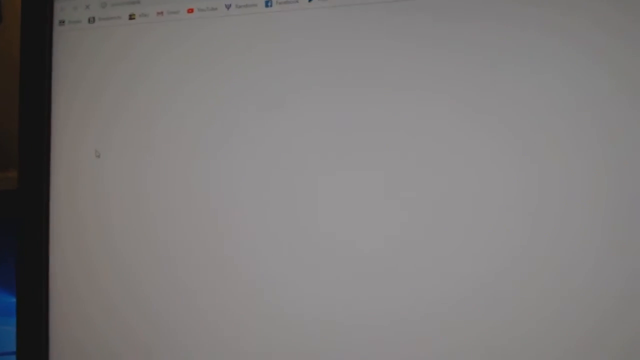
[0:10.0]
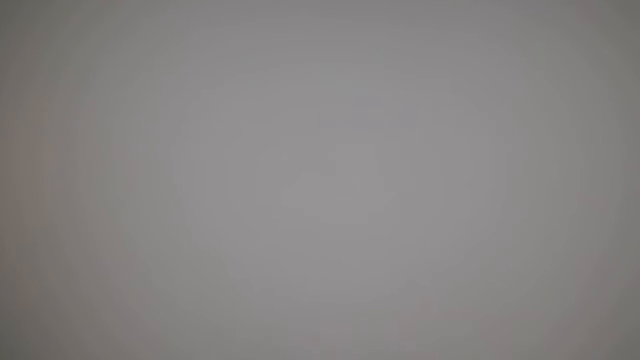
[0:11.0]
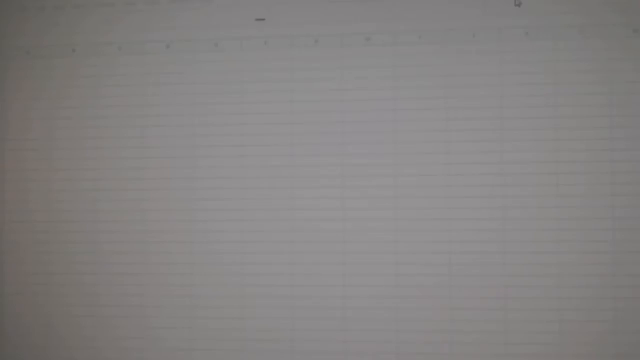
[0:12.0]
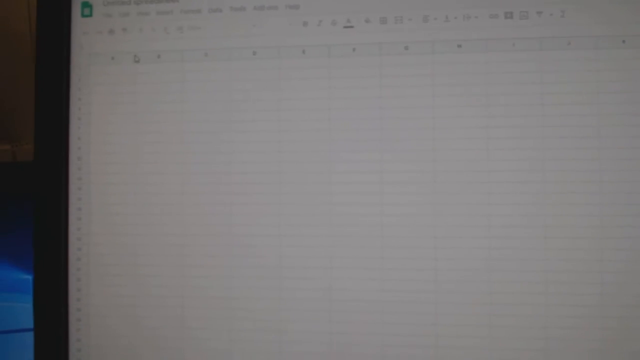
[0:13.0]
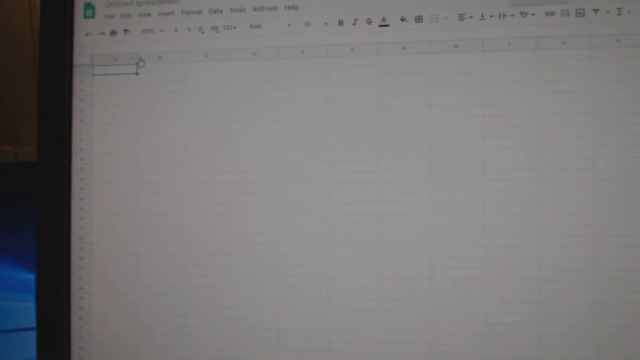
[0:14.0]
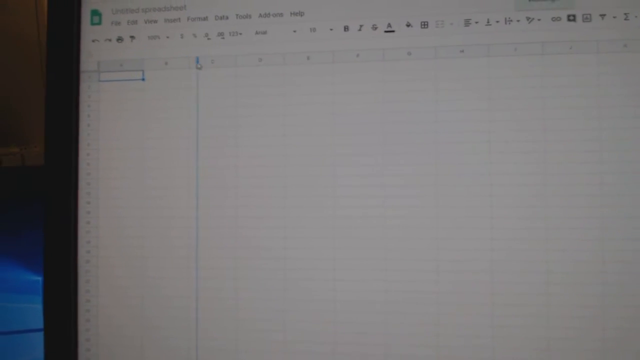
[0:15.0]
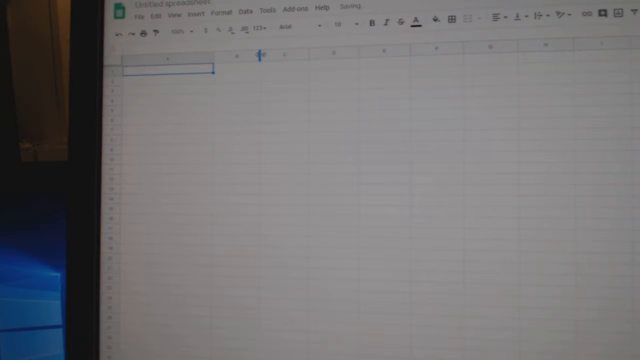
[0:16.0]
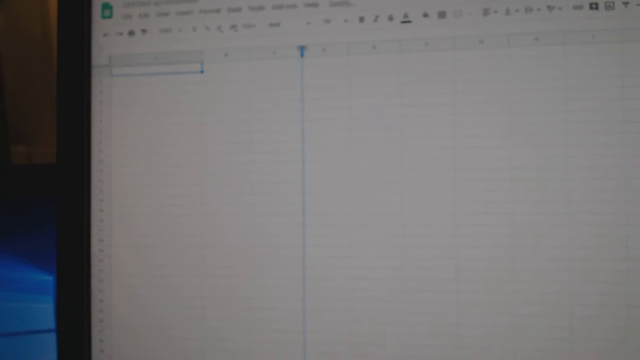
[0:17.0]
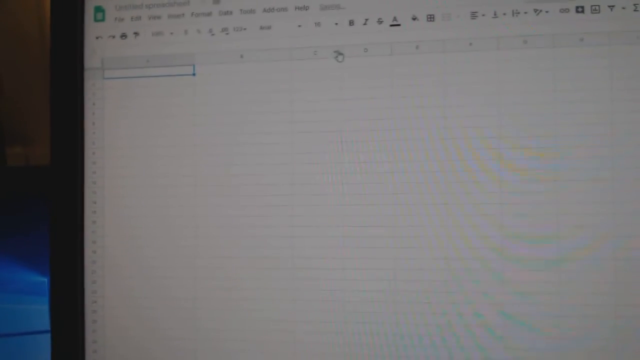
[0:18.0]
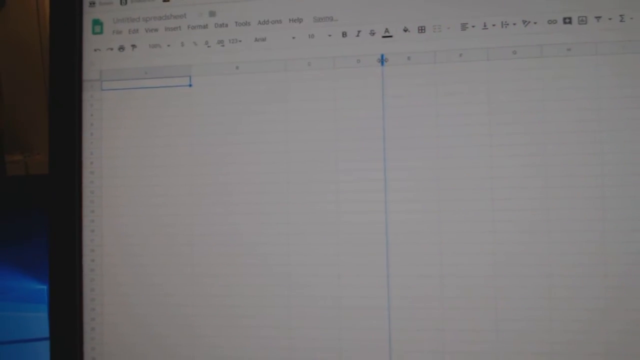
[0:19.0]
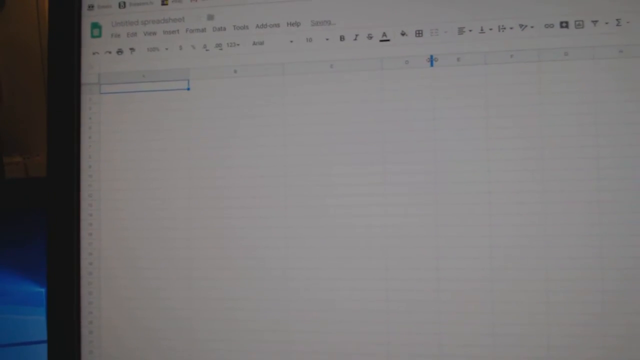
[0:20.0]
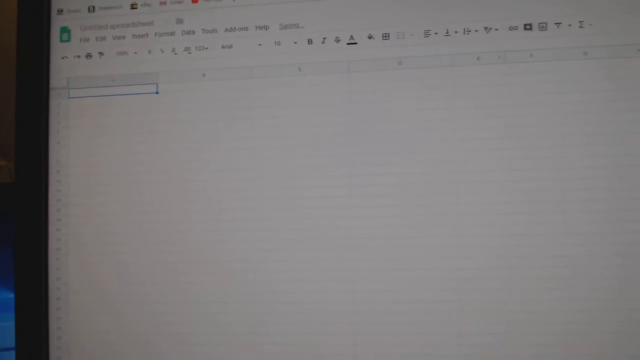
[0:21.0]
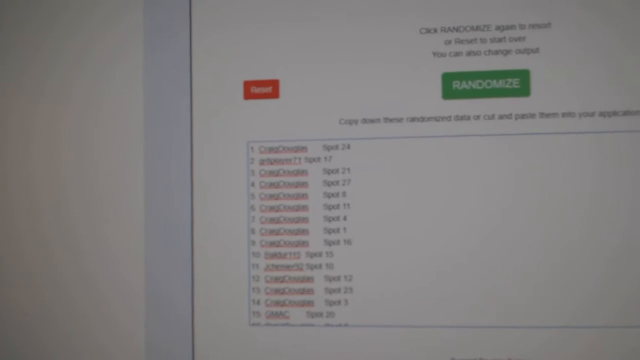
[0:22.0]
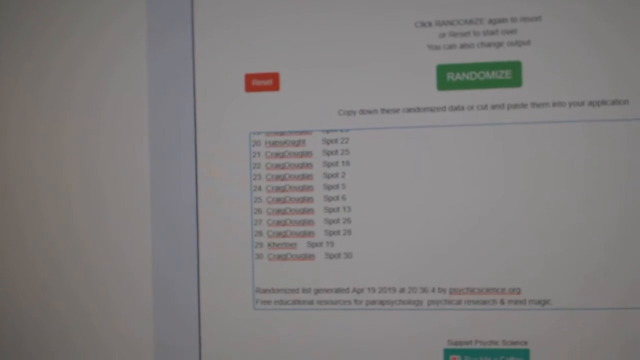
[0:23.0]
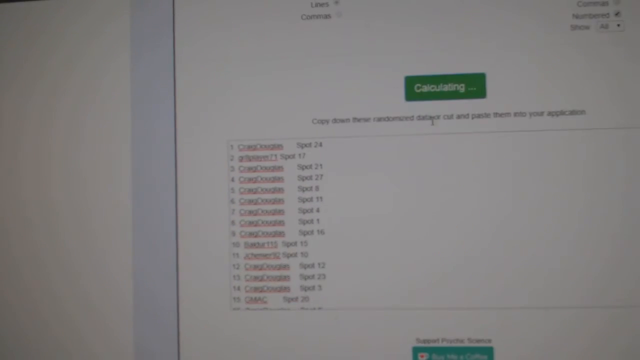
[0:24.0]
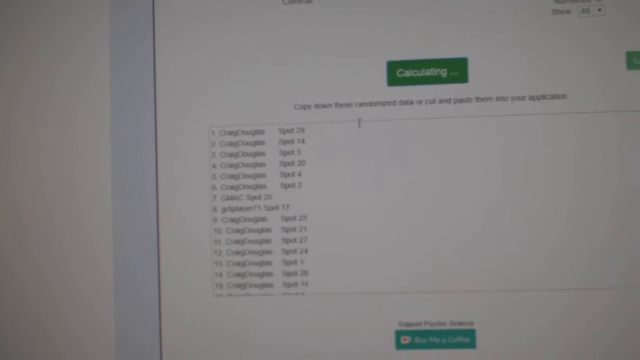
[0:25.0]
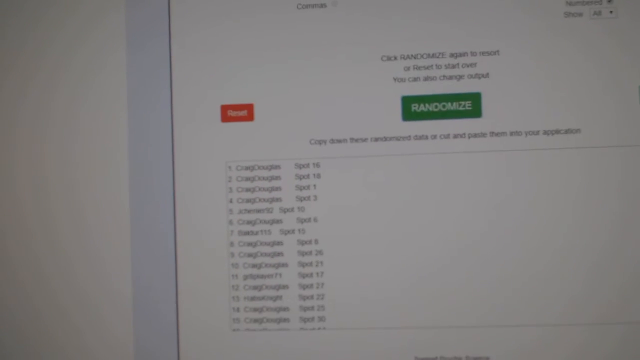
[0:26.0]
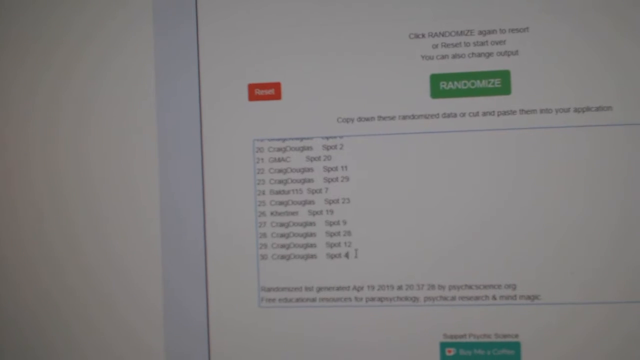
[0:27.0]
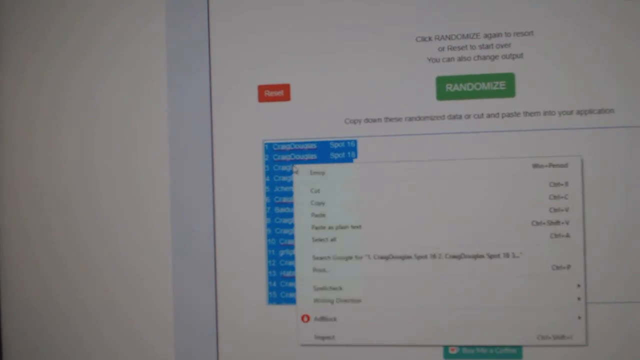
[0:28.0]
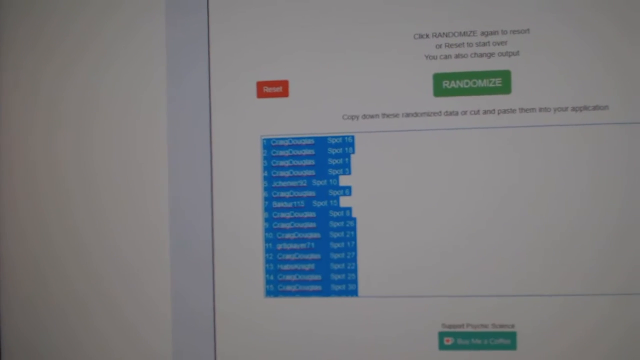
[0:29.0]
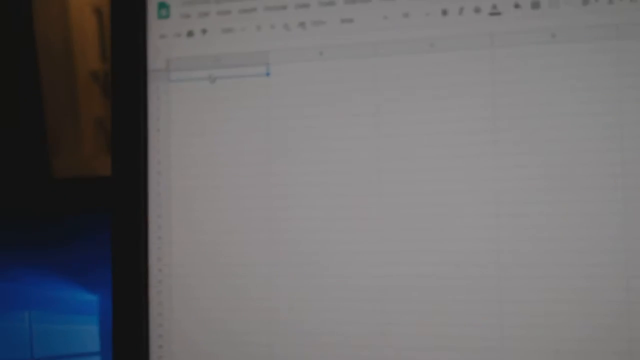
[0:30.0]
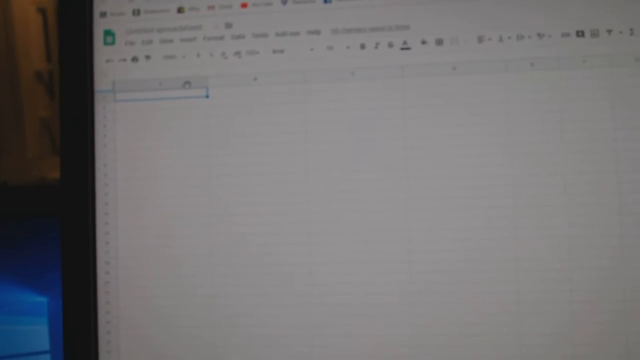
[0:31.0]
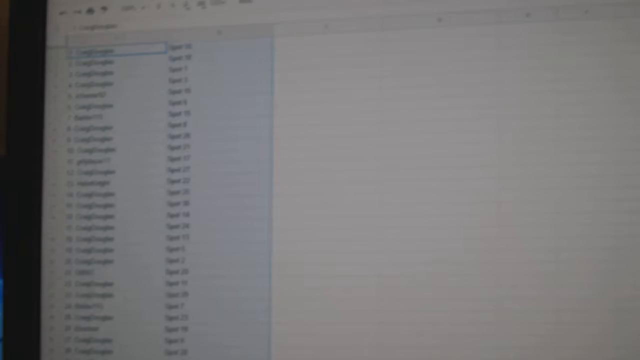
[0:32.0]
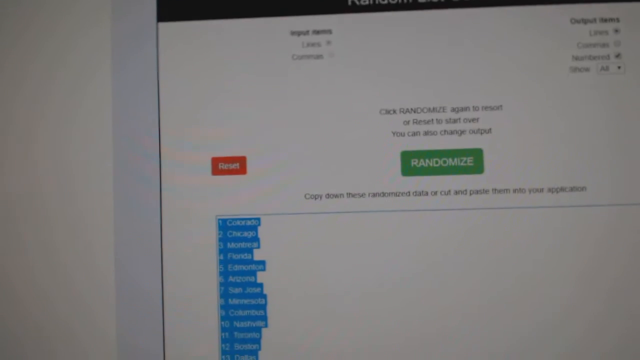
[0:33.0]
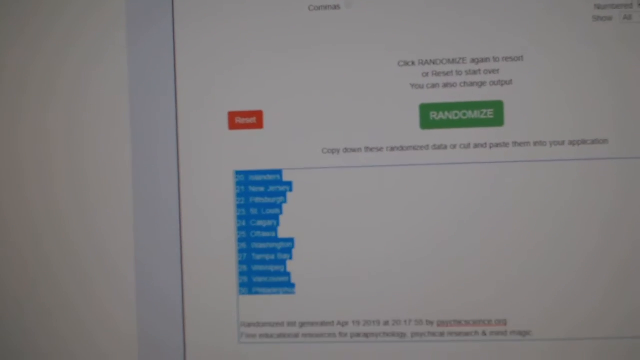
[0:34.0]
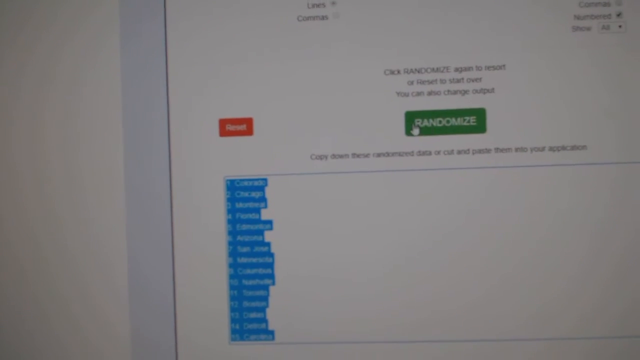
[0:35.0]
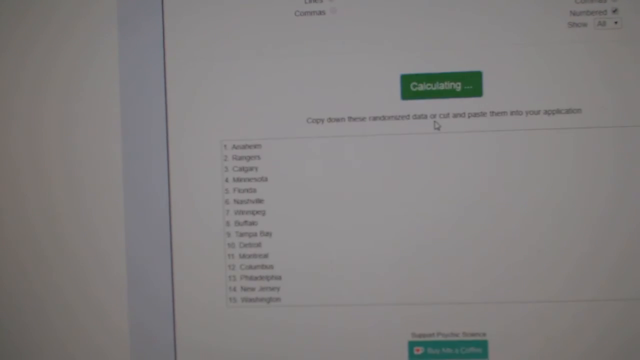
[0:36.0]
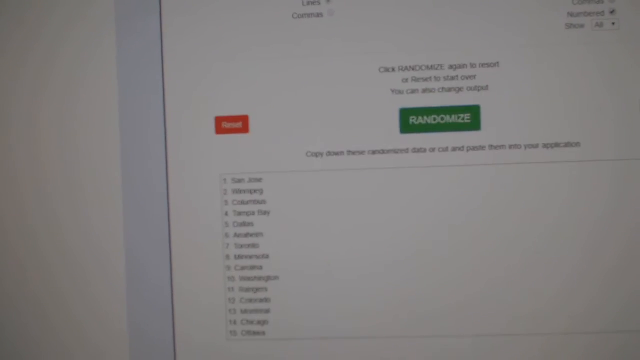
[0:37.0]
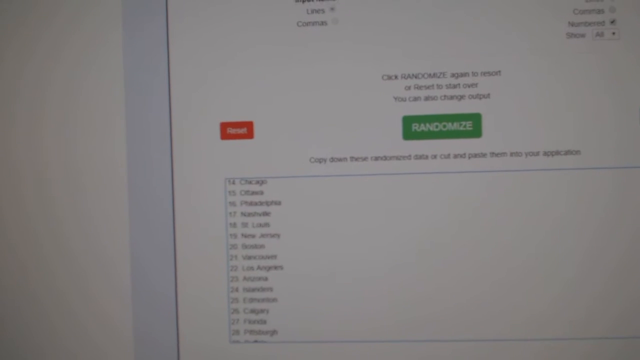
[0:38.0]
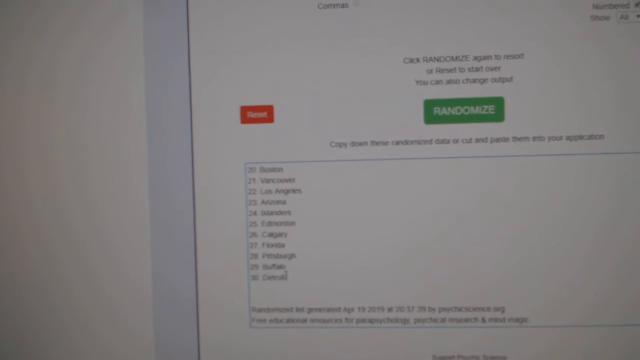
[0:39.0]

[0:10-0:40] Another screen recording, apparently of a Google Sheet, shows someone trying to format the sheet. The video is low in definition; it is somebody holding up a phone camera and recording a monitor screen. A randomizer is being used, and values appear to be put into the sheet. It looks like the cells on the spreadsheet are being resized, and then some data is grabbed and put into the spreadsheet. There are no banners, no descriptions of what is being done, and no visible prompt being read from.